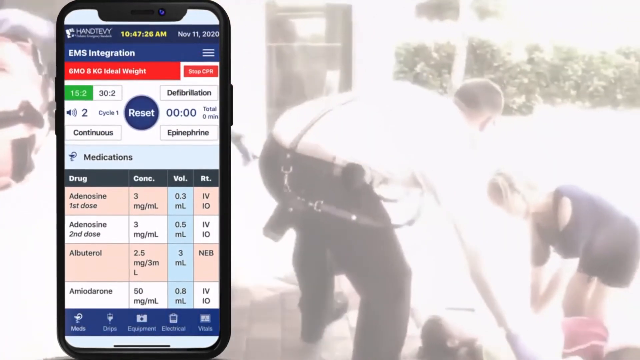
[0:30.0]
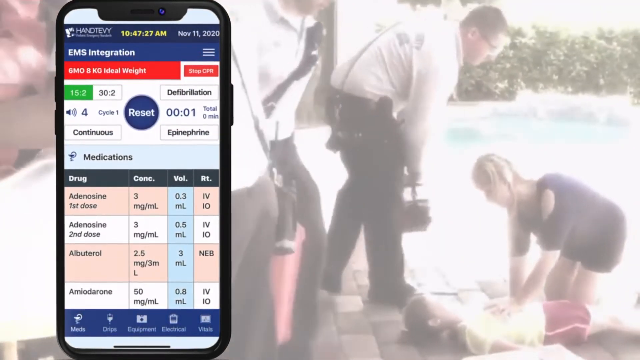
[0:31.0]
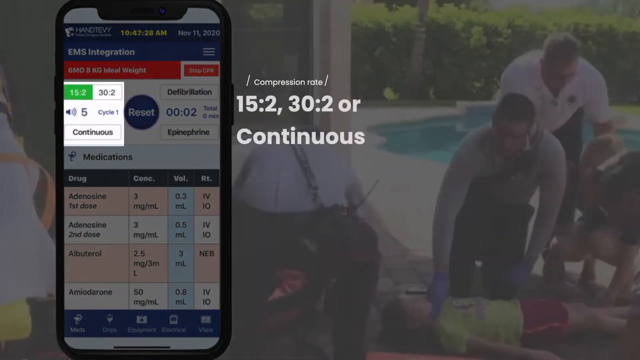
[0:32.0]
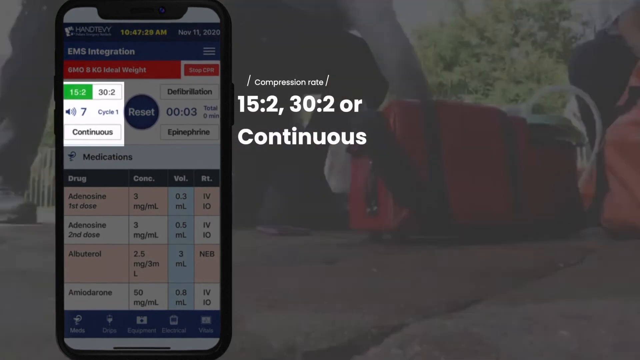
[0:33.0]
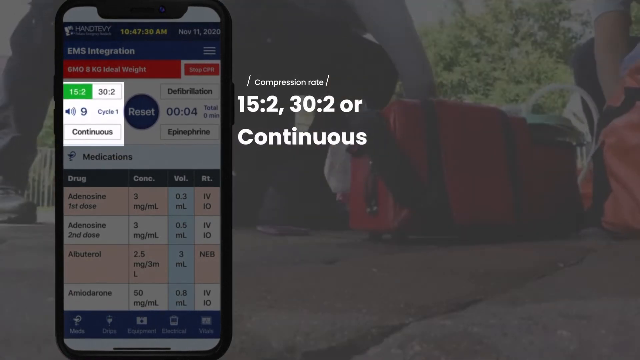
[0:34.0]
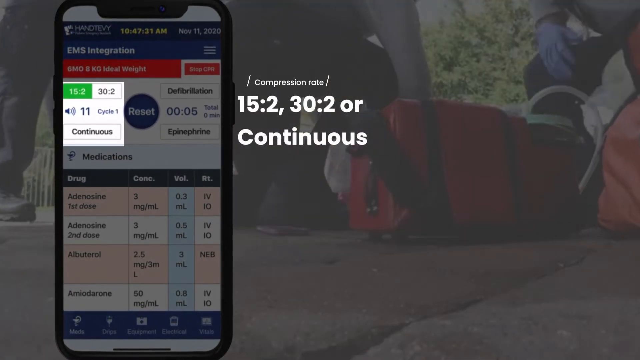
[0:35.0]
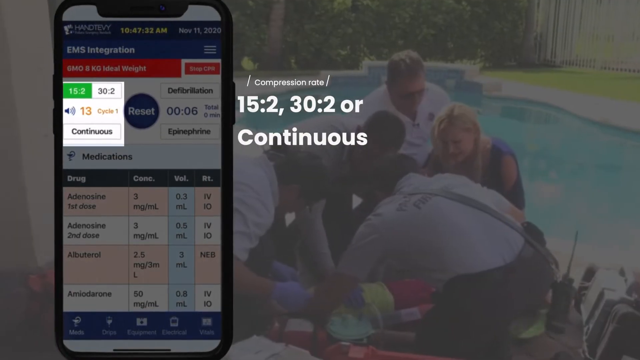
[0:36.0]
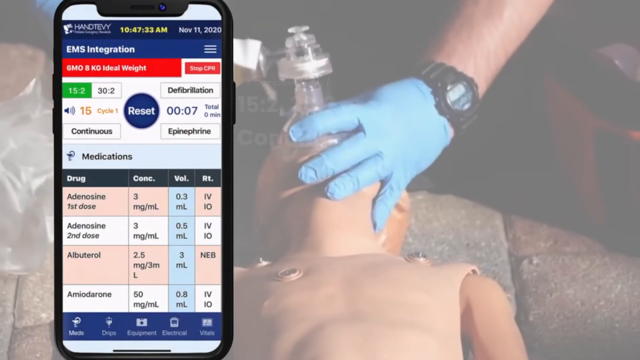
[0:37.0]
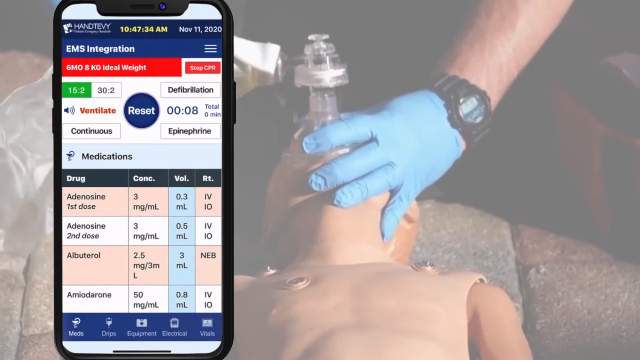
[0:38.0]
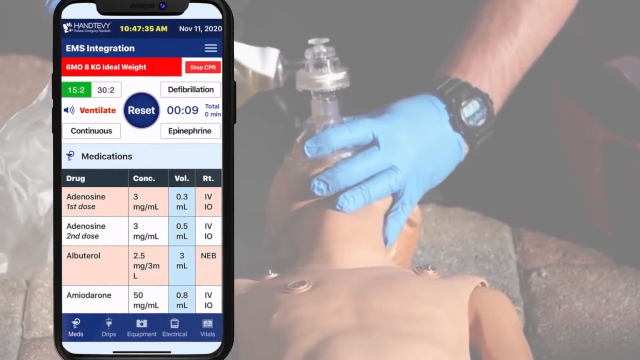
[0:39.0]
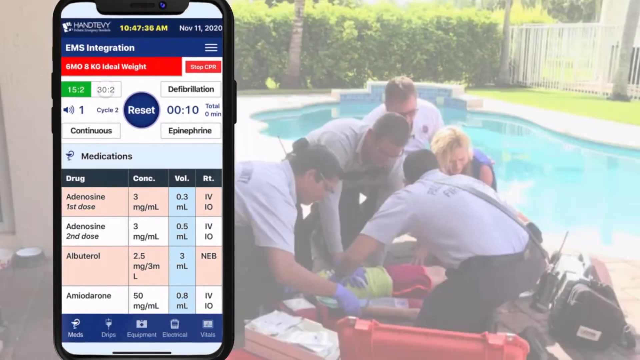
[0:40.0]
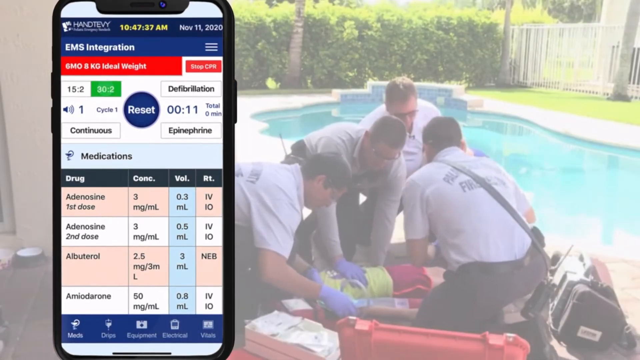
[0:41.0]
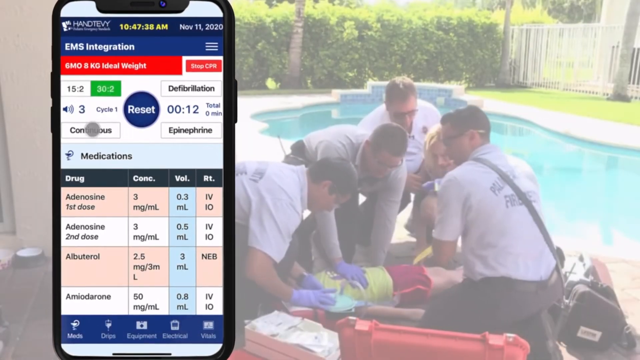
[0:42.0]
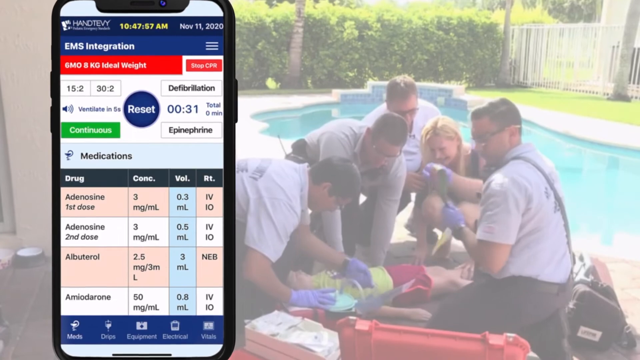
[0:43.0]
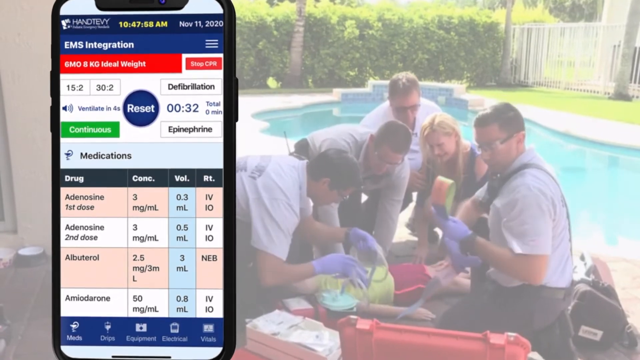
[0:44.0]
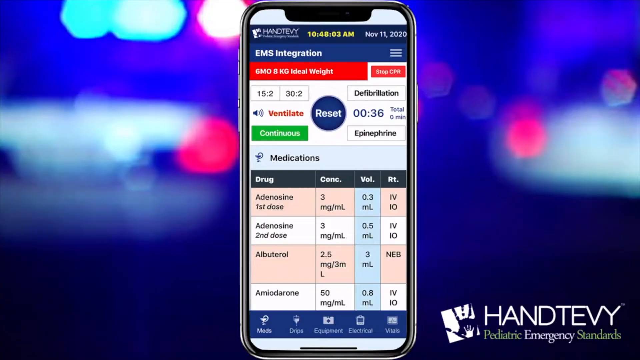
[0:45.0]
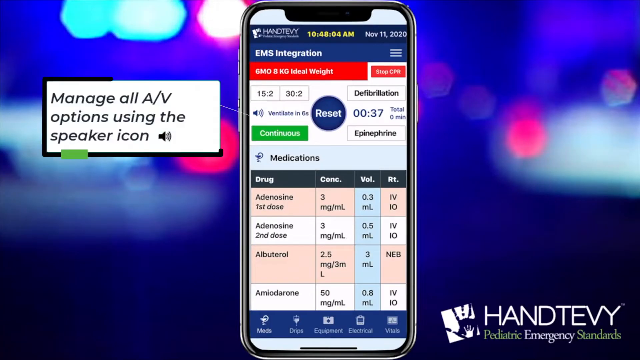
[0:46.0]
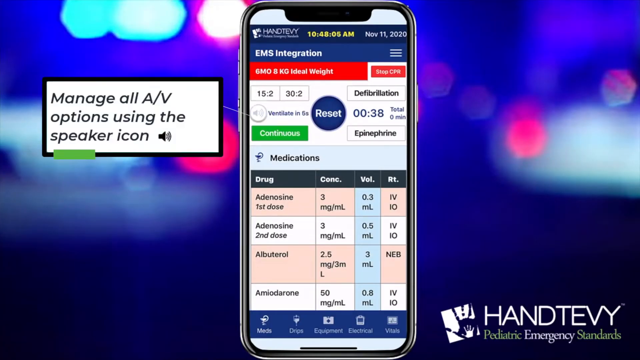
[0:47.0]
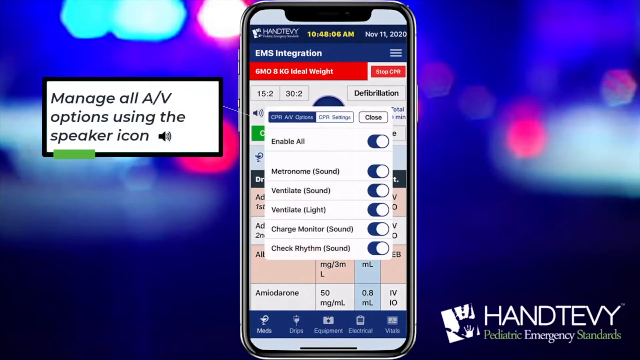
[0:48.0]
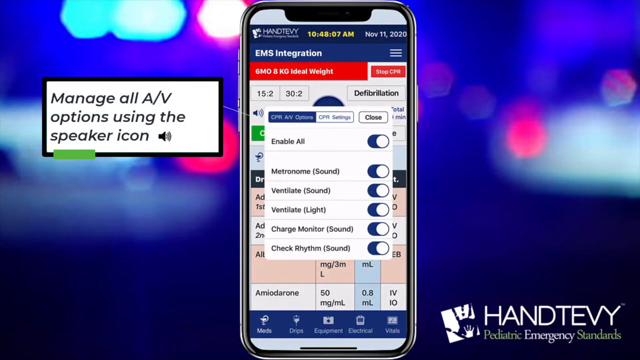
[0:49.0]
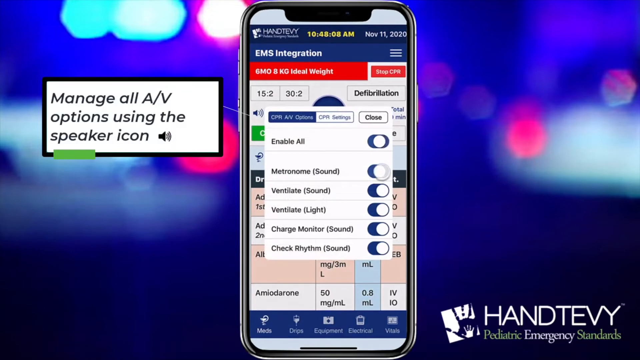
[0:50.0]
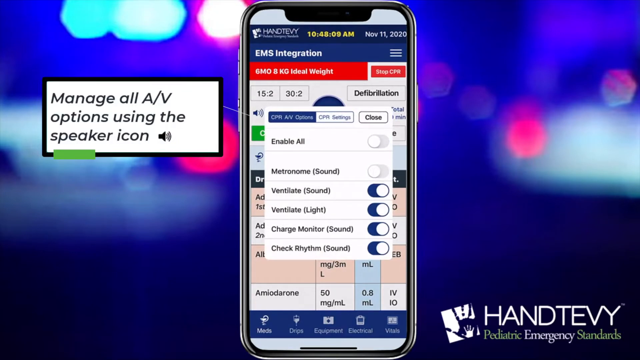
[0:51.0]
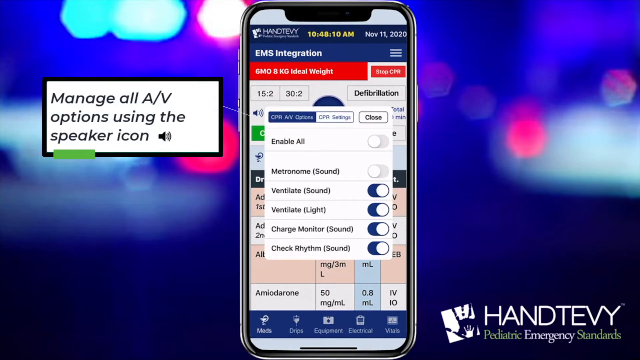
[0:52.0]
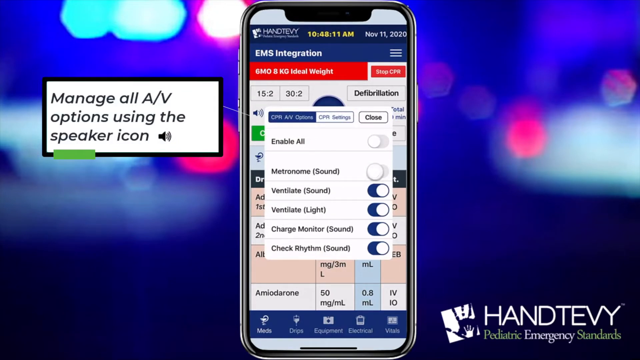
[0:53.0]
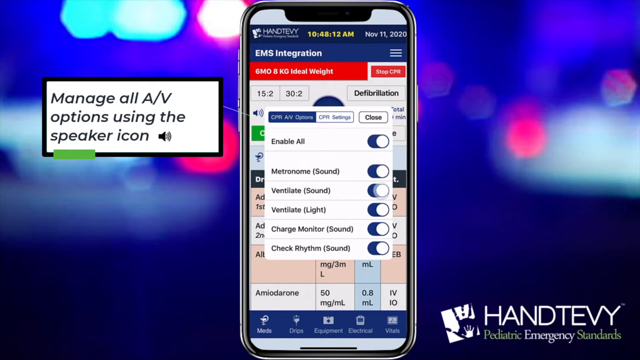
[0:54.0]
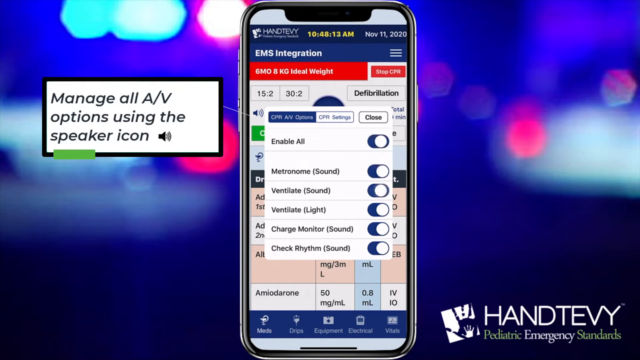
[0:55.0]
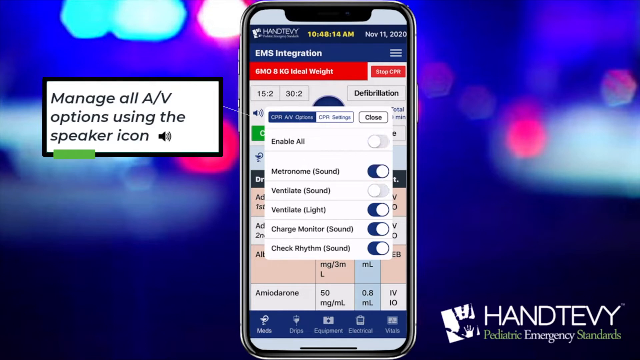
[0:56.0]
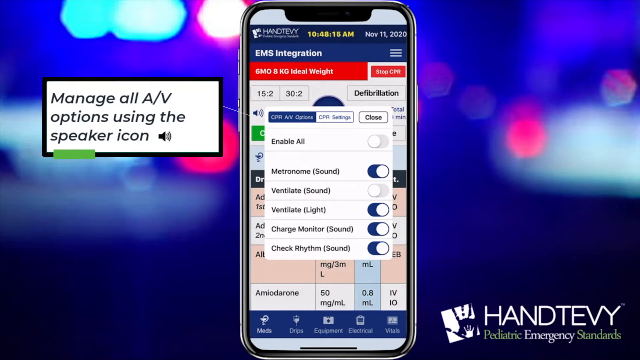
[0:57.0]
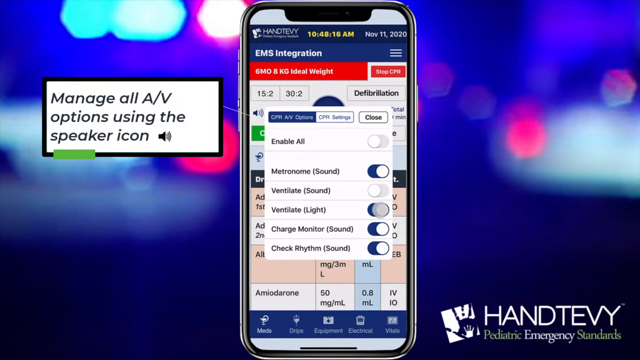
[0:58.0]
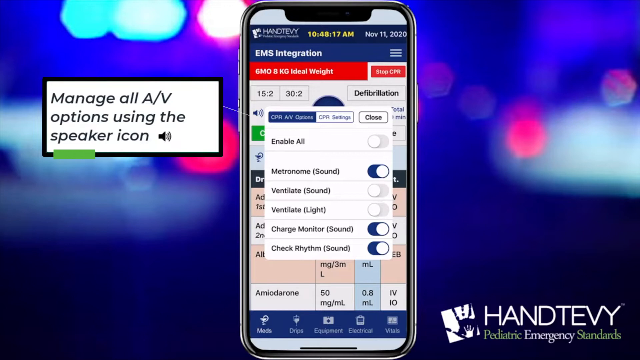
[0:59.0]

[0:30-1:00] Scenes of EMS workers performing CPR play in the background under a slight white haze. On the left side of the screen is an iPhone screen running an app that assists EMS workers, and next to it text appears reading "Compression rate 15:2, 30:2 or Continuous." The background scenes keep shifting but always show EMS workers working on a patient. In one scene, an oxygen mask is applied over the face of a dummy, as if they are practicing CPR on it, with a gloved hand holding the mask over the dummy's face. This is cut in with scenes of EMS workers working with an actual patient on the ground. The video then switches to a screen with just the iPhone in the center and the app displayed on it, with a text box on the left that reads "Manage all A/V options using the speaker icon."